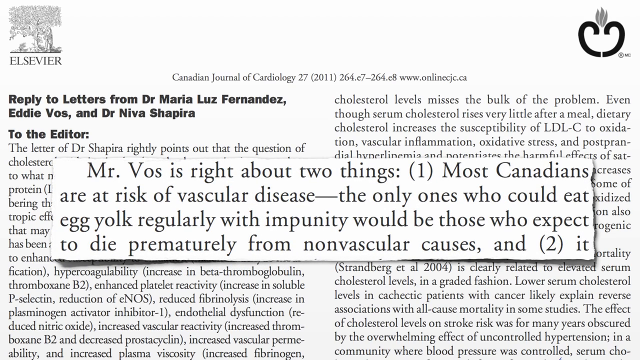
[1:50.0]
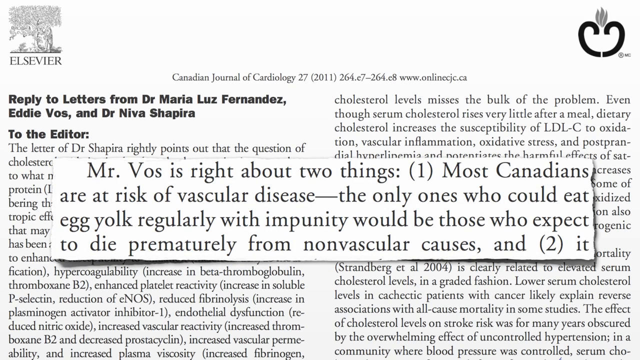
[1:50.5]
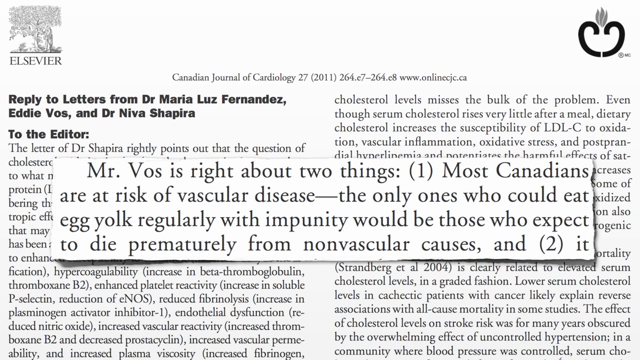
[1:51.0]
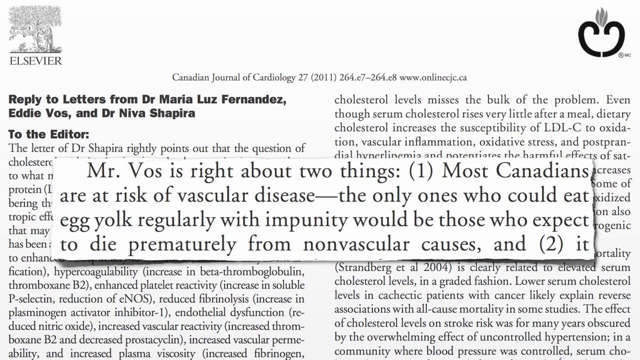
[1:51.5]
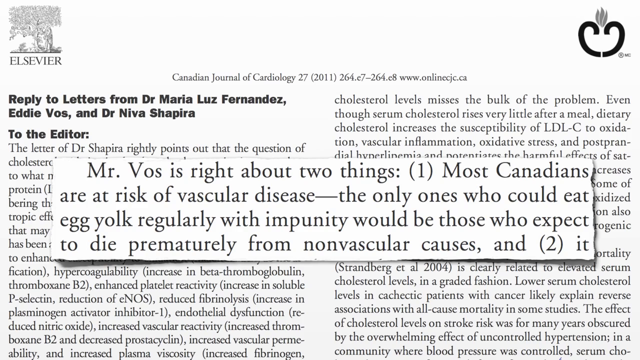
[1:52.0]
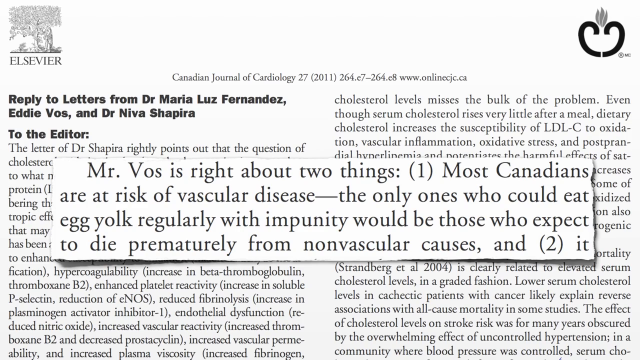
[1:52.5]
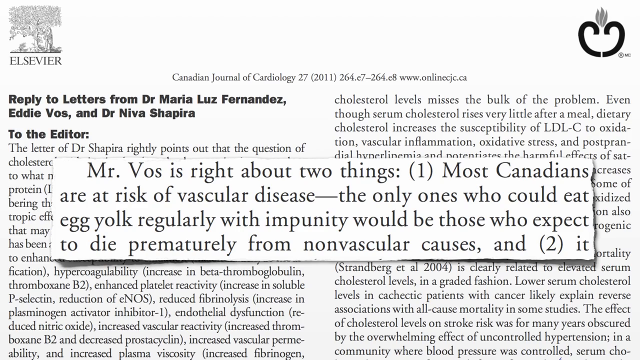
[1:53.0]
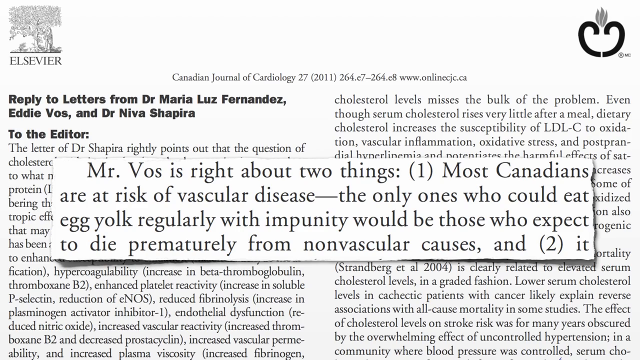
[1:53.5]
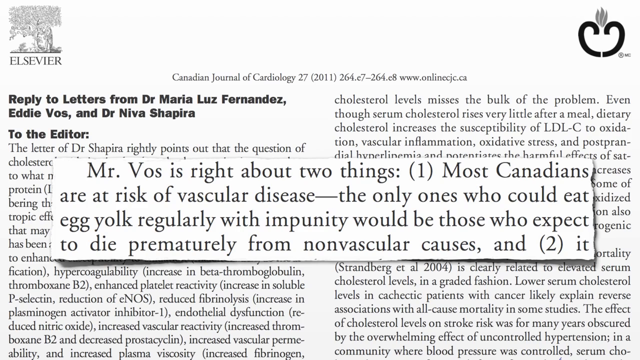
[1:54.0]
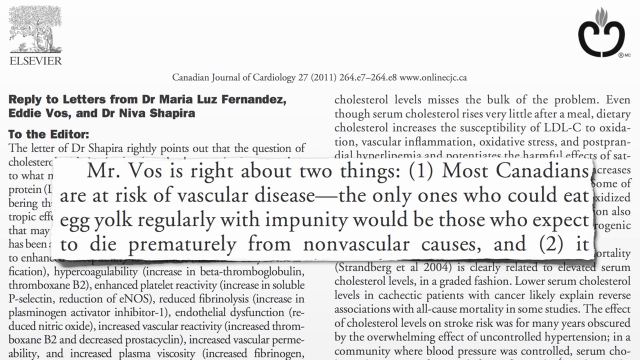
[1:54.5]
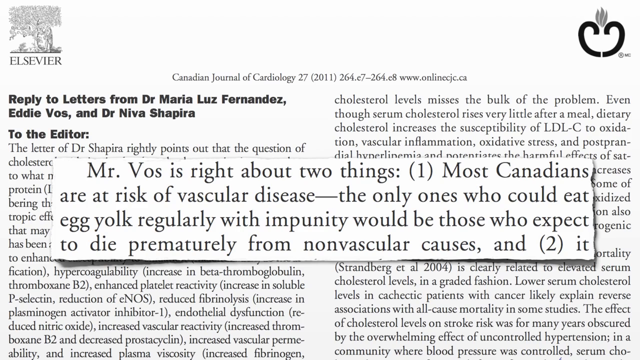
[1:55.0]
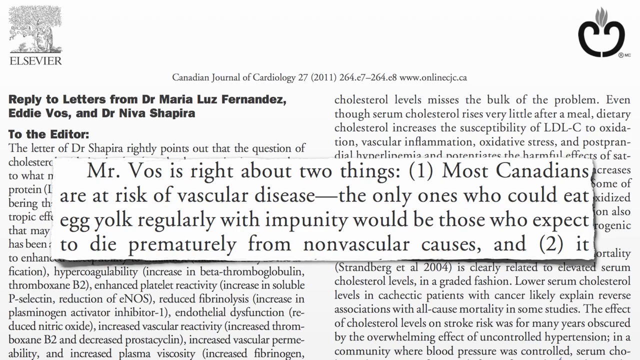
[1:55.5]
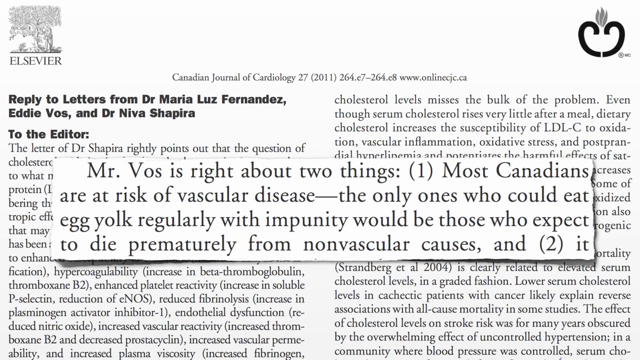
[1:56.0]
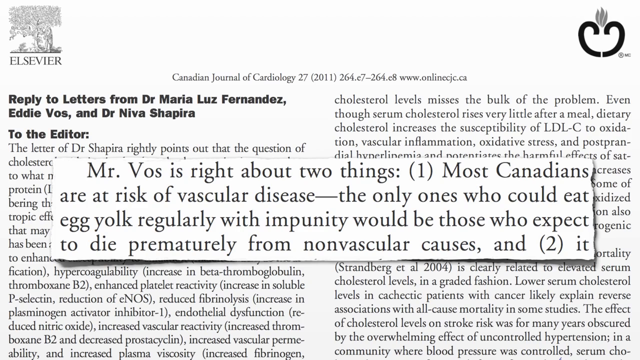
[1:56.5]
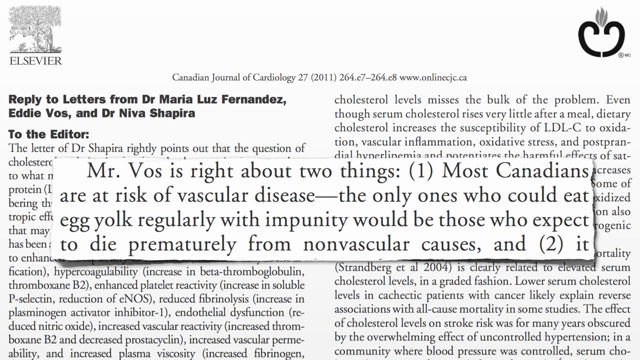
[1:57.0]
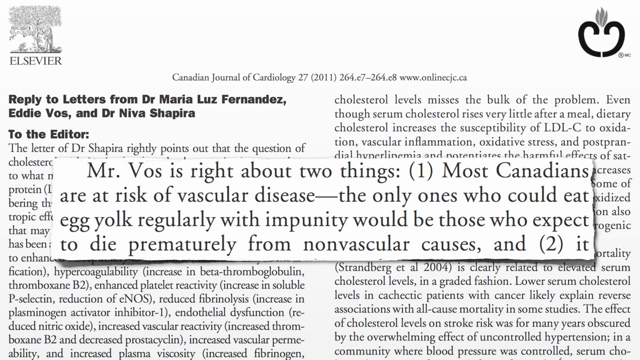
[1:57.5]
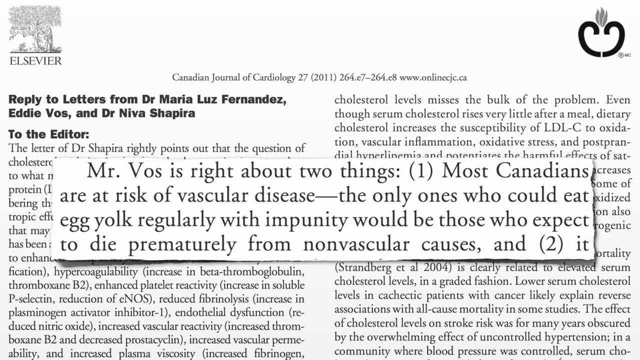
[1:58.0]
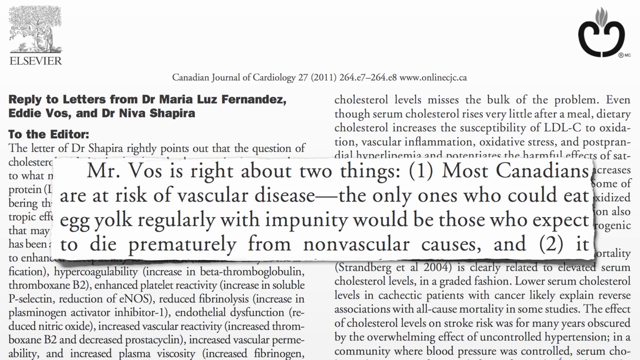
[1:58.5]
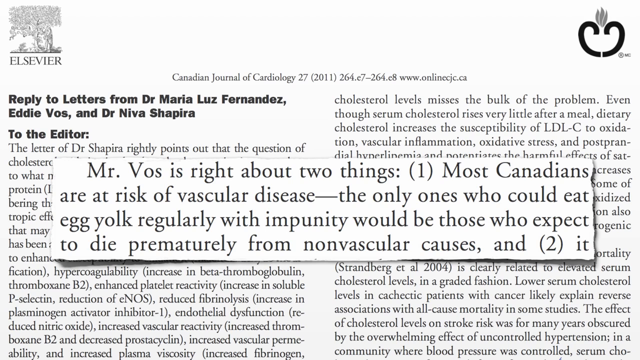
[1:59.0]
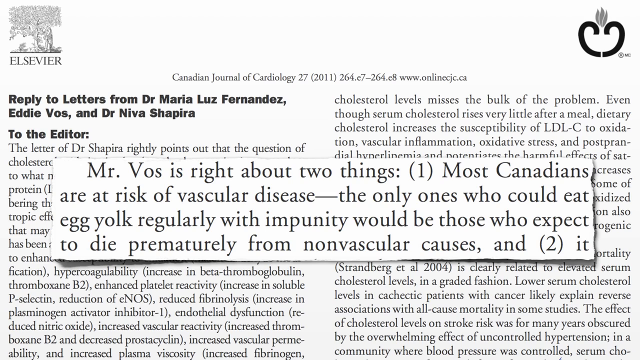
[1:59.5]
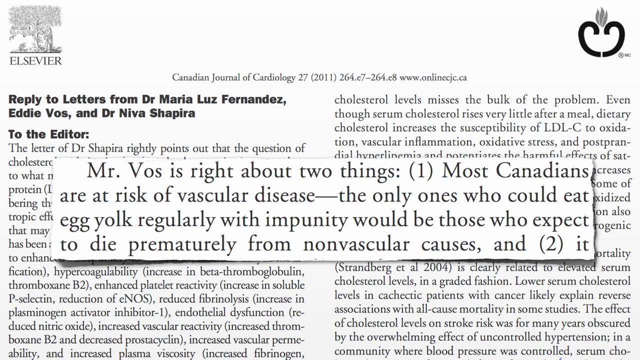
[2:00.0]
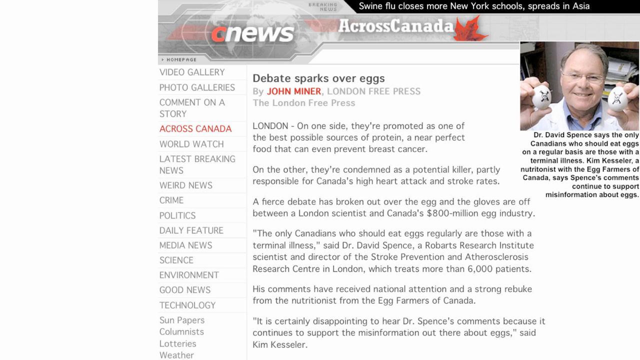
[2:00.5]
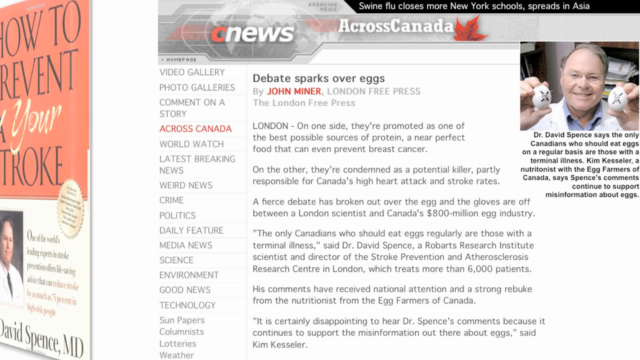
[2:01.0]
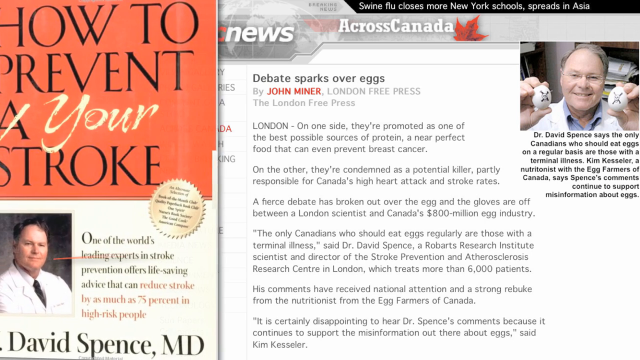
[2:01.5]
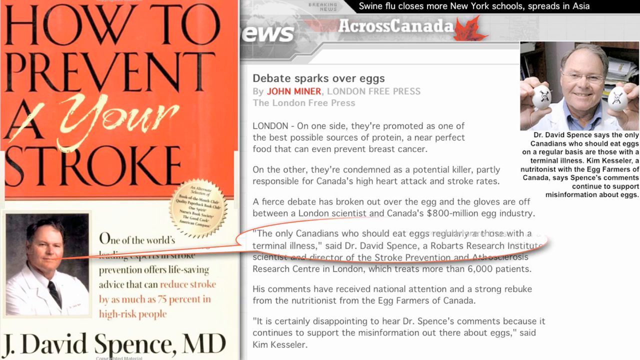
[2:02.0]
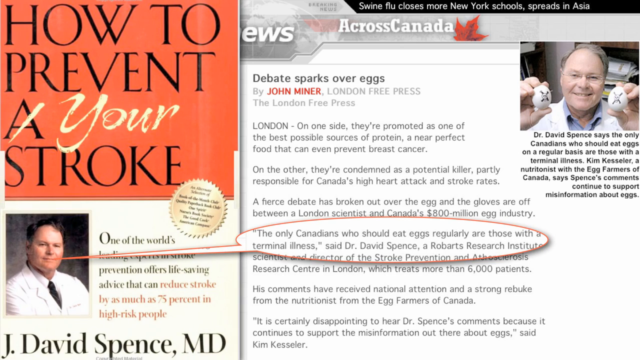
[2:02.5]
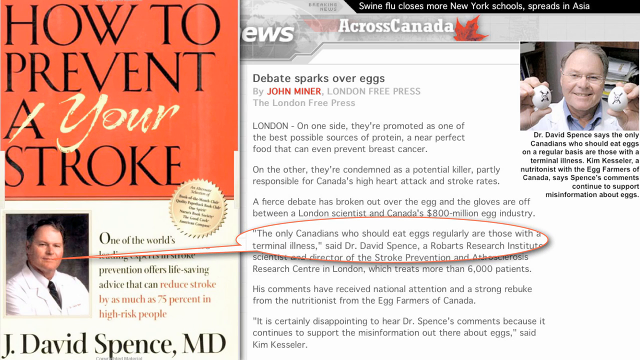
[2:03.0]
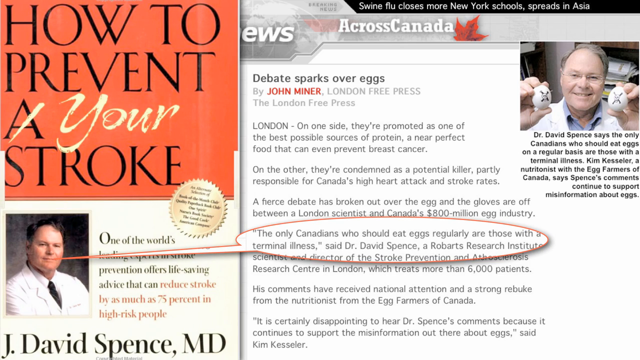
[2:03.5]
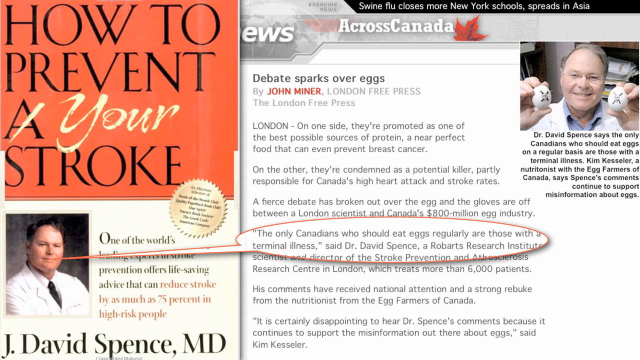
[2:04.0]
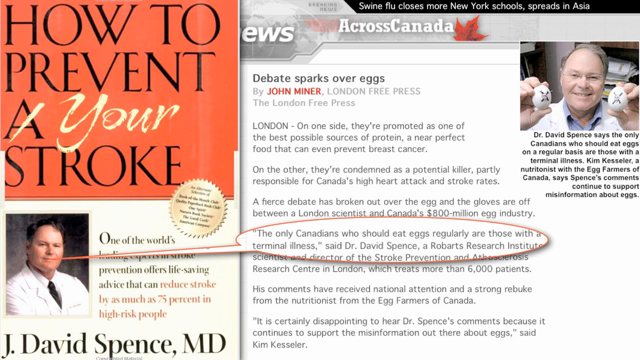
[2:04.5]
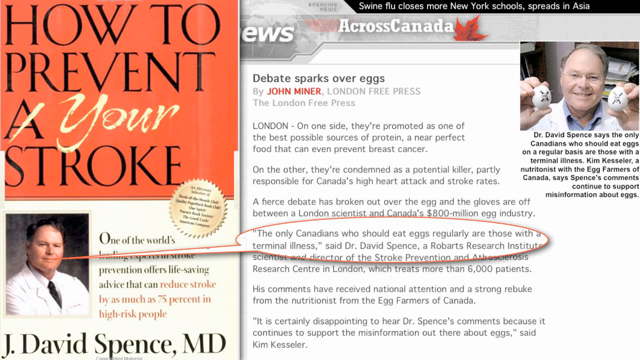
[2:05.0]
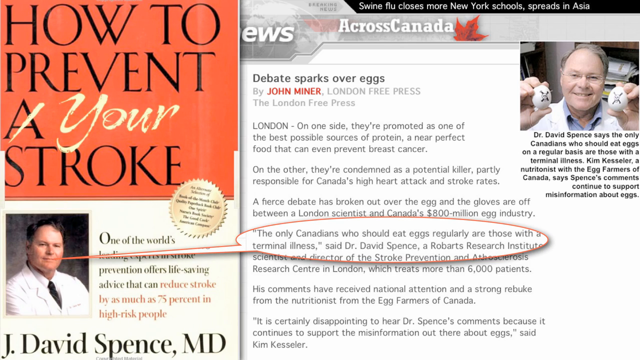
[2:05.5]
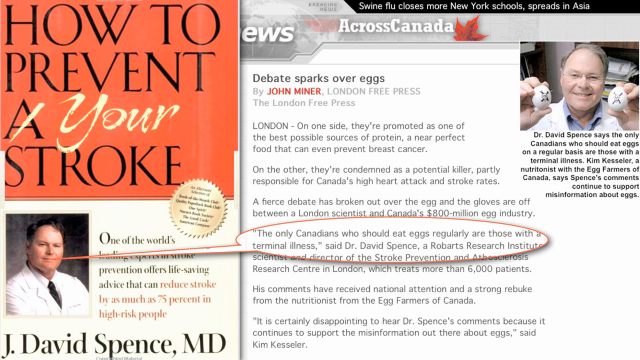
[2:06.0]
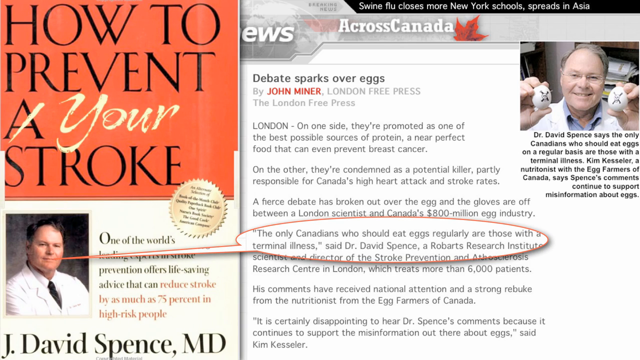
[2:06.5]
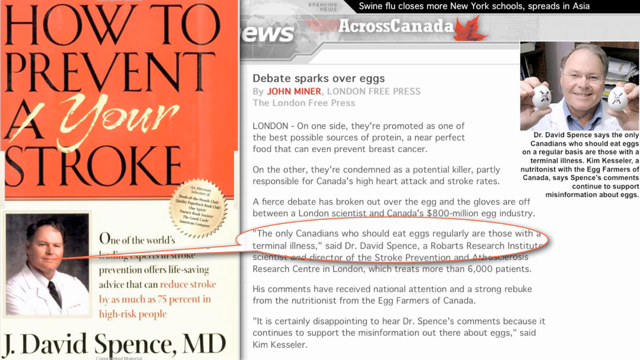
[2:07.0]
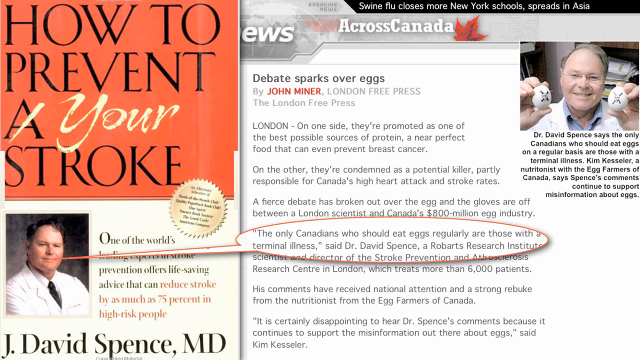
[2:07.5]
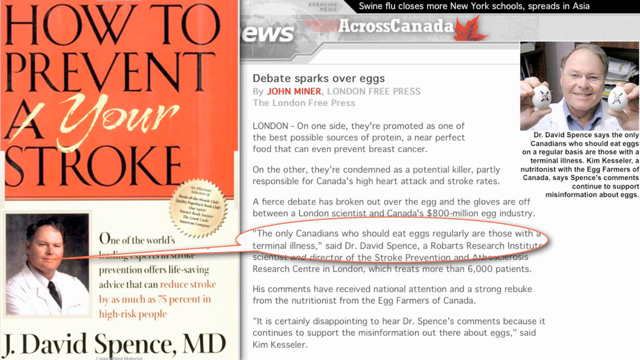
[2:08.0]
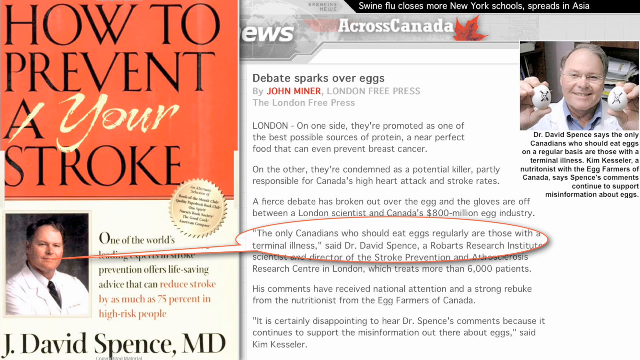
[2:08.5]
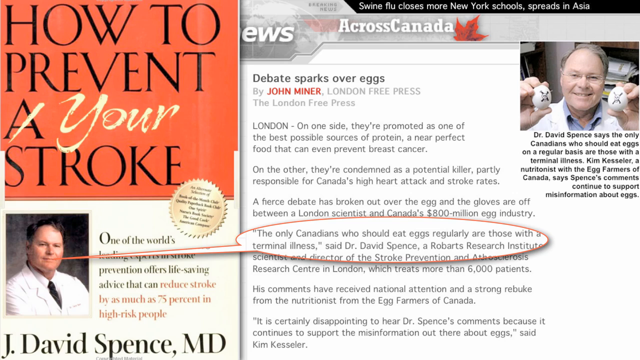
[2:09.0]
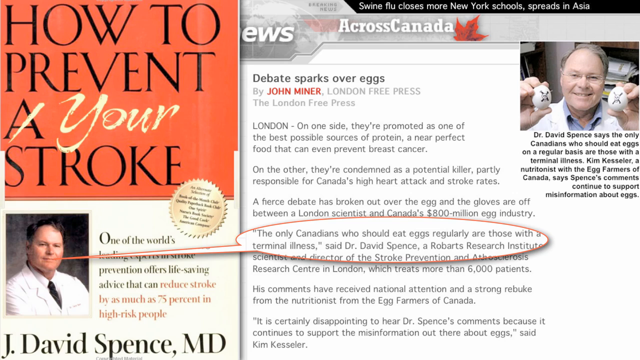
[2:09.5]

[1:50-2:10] The journal article titled "Reply to letters from Dr. Maria Luz Fernandez, Eddie Vos, and Dr. Neva Shapira" is overlapped at the top by a white rectangle with black text reading "Mr. Vos is right about two things. One, most Canadians are at risk of vascular disease. The only ones who could eat egg yolk regularly with impunity would be those who expect to die prematurely from non-vascular causes, and two, it", where the text ends. After around 10 seconds, the screen transitions to what looks to be a CNEWS webpage, across Canada. On the left-hand side of the screen, a book advert appears and rotates anticlockwise from a side-on to a frontal view; its title is "How to Prevent Your Stroke", with the letter "A" scored out and replaced by "Your". A picture of the author is in the bottom left corner, and an orange-outlined speech bubble appears from the author's mouth and hovers over text on the webpage reading "The only Canadians who should eat eggs regularly are those with a terminal illness, said Dr. David Spence."